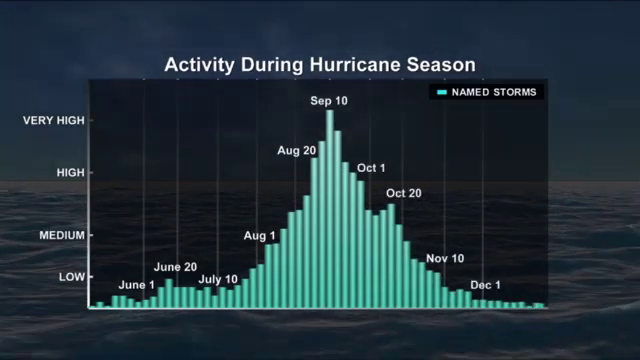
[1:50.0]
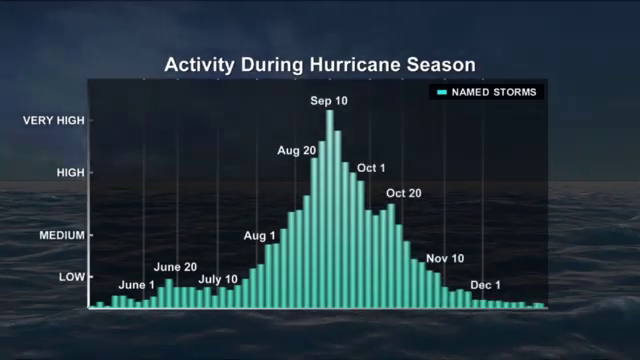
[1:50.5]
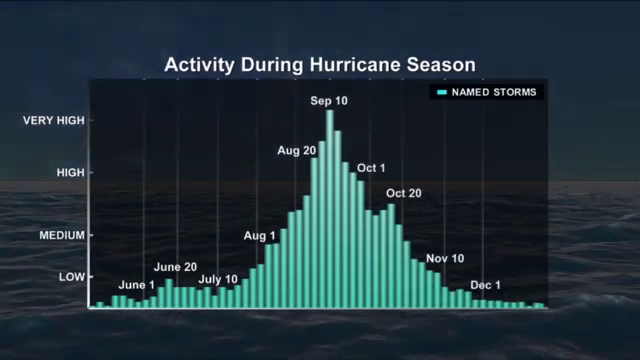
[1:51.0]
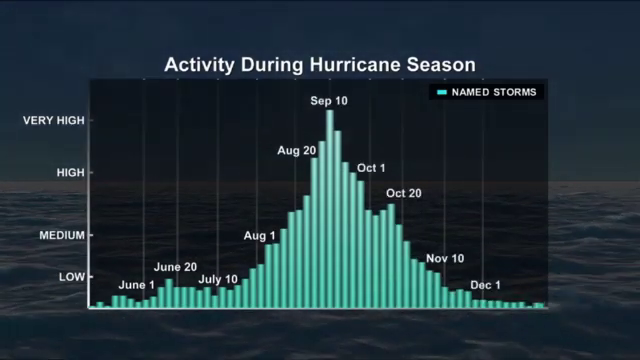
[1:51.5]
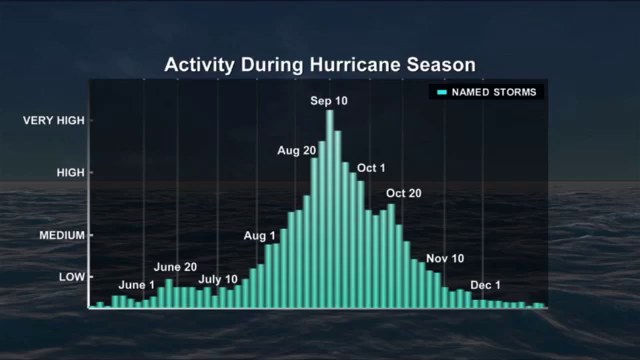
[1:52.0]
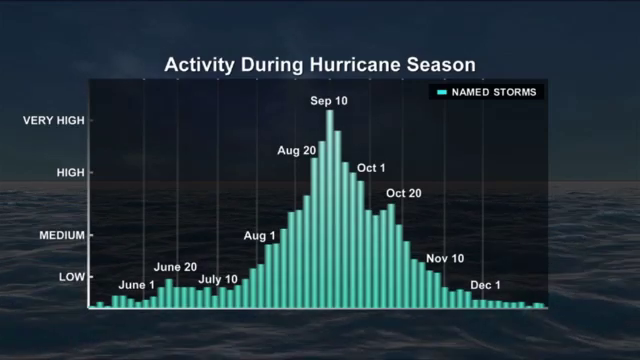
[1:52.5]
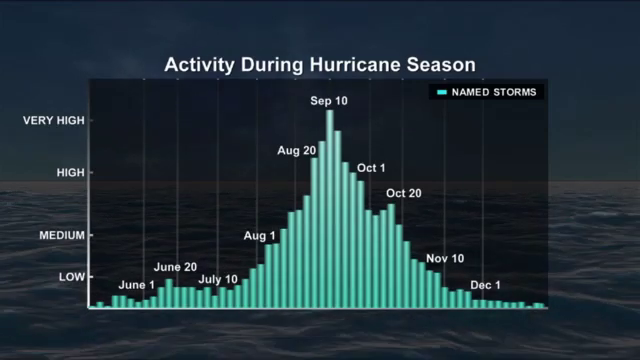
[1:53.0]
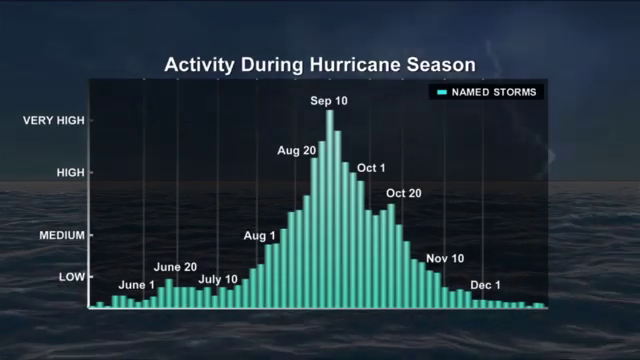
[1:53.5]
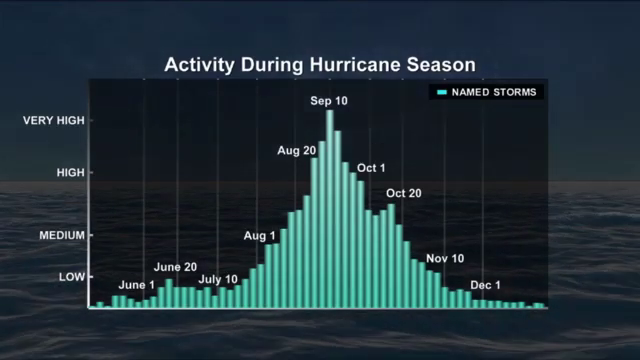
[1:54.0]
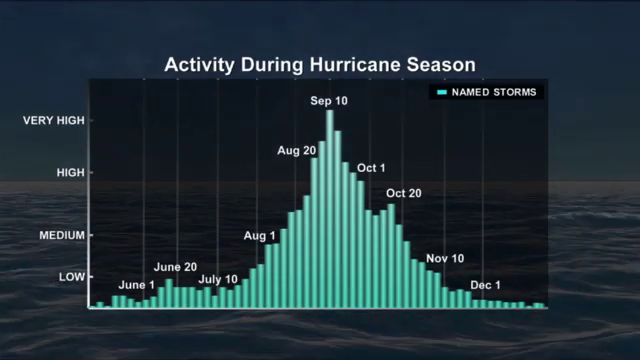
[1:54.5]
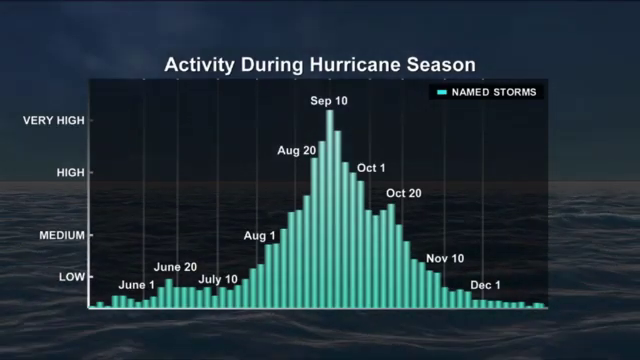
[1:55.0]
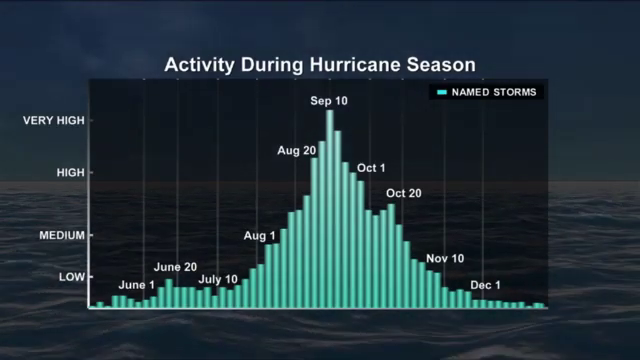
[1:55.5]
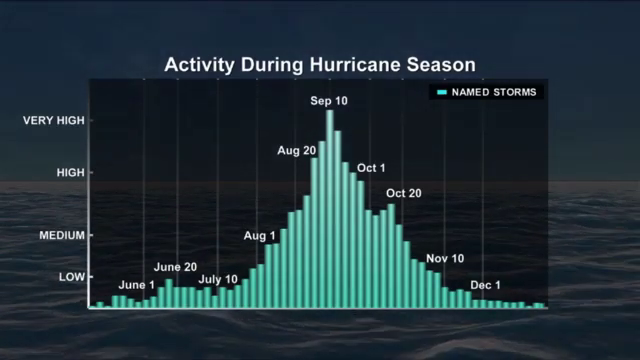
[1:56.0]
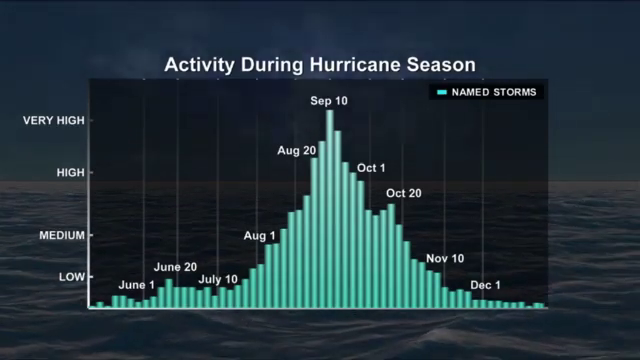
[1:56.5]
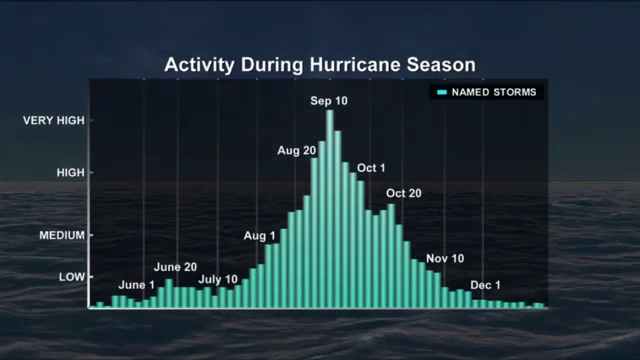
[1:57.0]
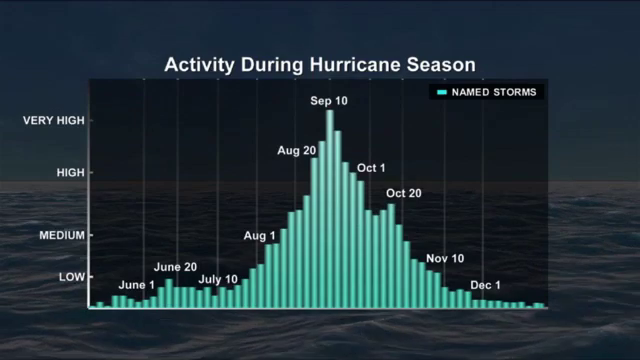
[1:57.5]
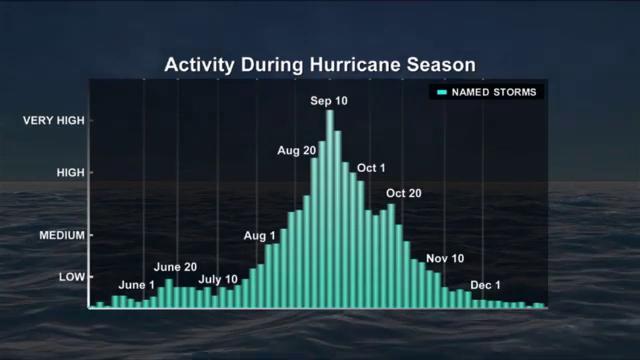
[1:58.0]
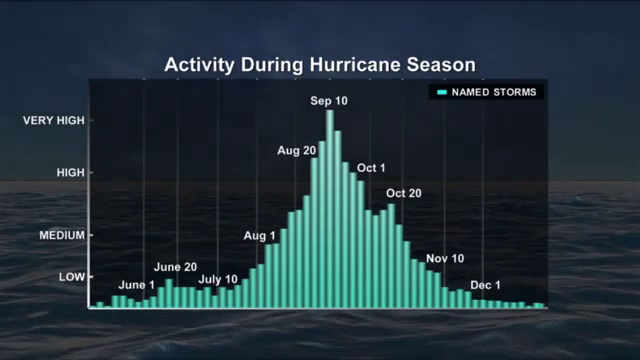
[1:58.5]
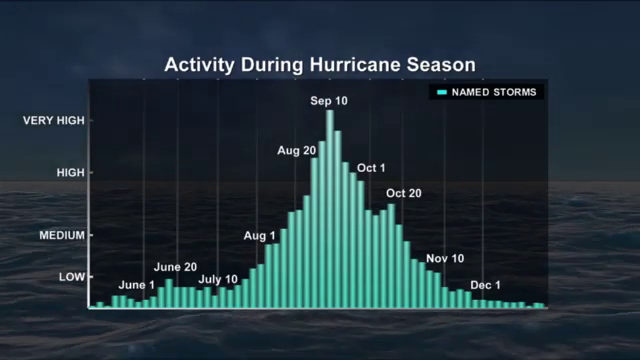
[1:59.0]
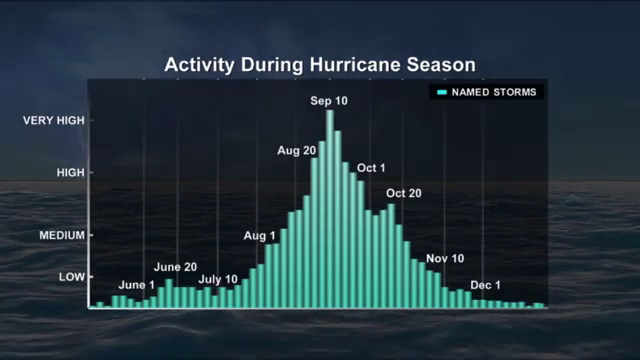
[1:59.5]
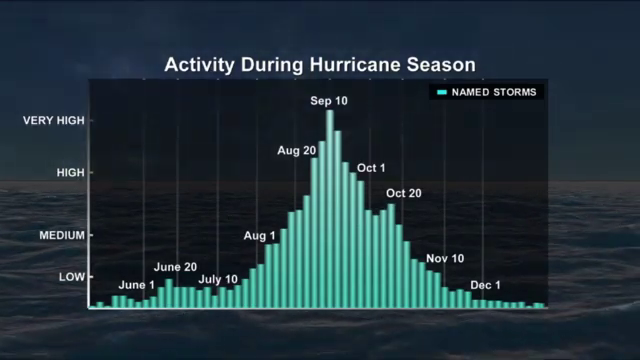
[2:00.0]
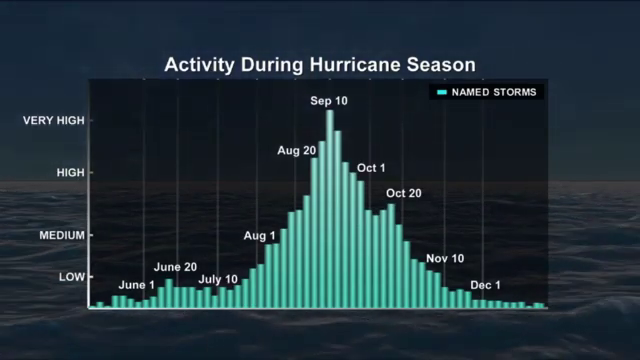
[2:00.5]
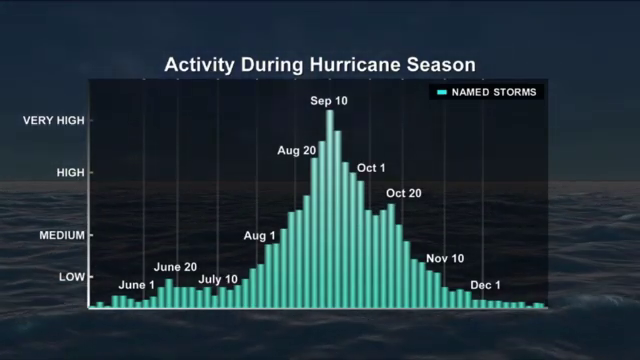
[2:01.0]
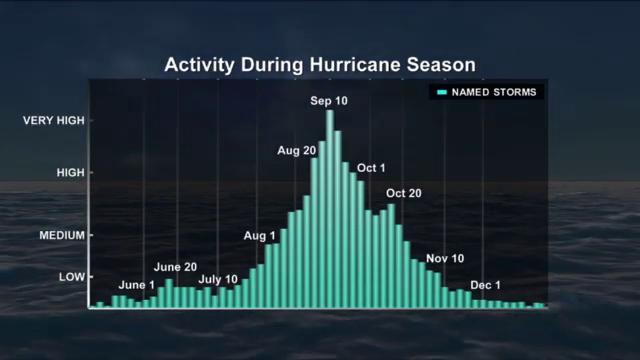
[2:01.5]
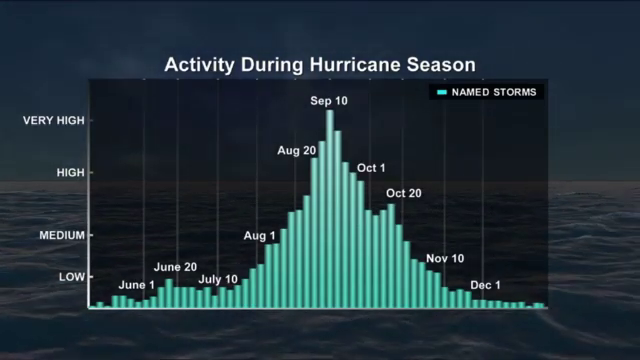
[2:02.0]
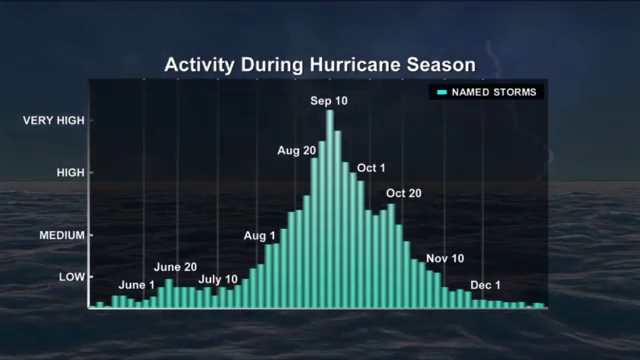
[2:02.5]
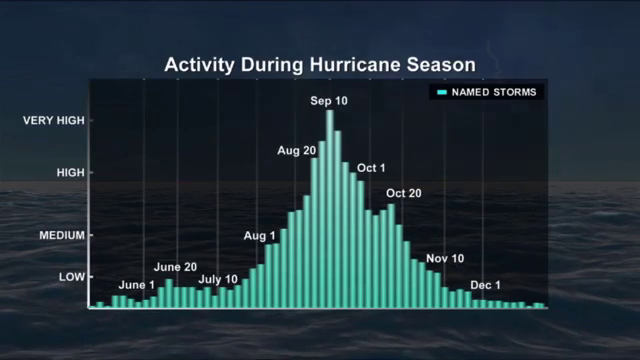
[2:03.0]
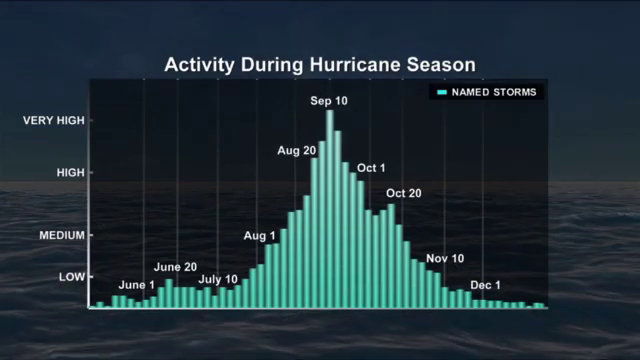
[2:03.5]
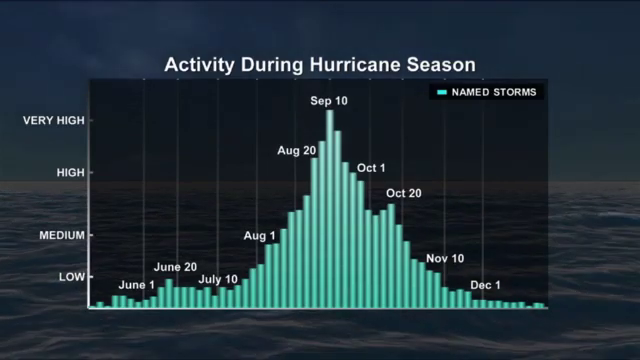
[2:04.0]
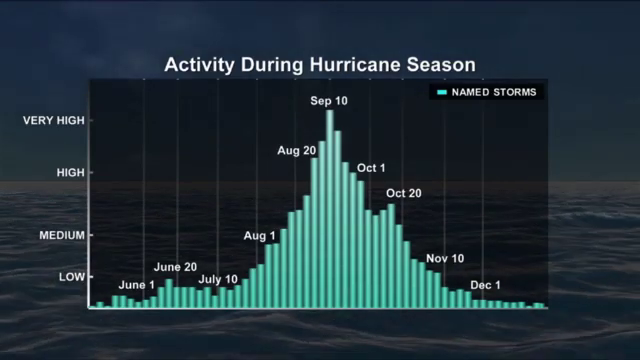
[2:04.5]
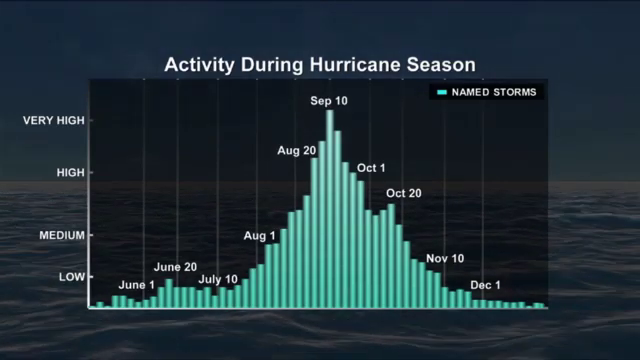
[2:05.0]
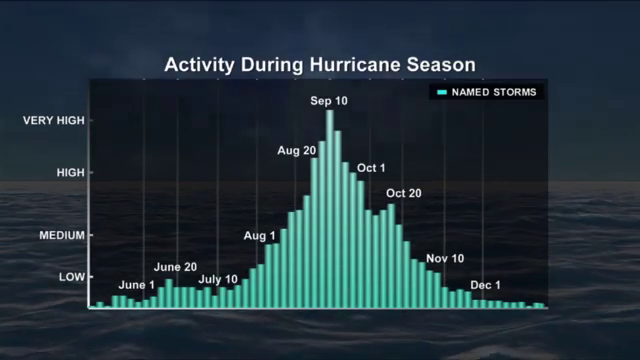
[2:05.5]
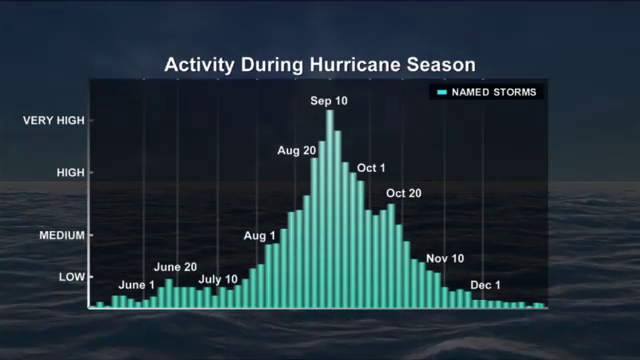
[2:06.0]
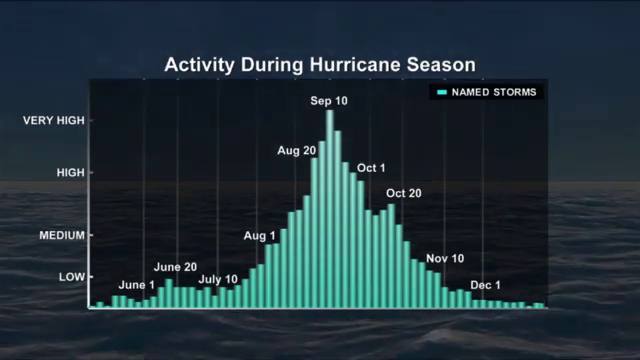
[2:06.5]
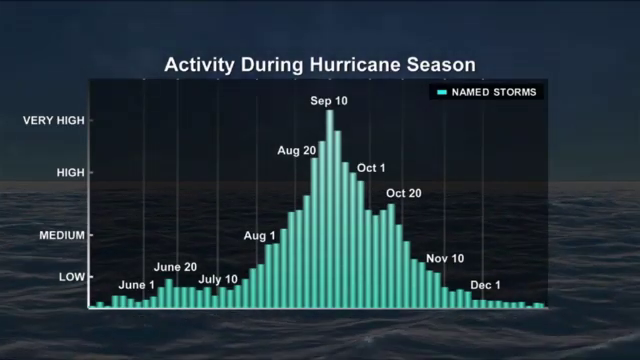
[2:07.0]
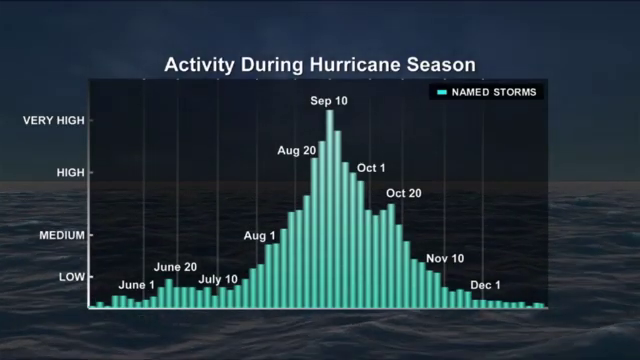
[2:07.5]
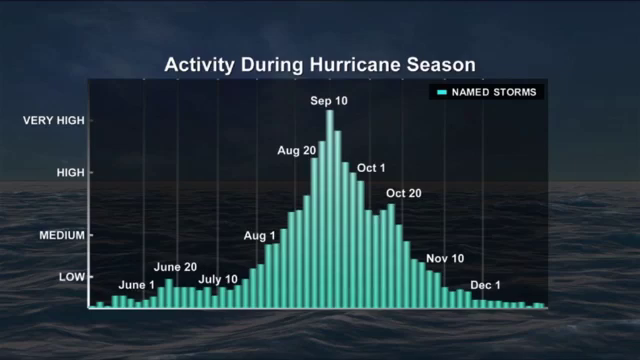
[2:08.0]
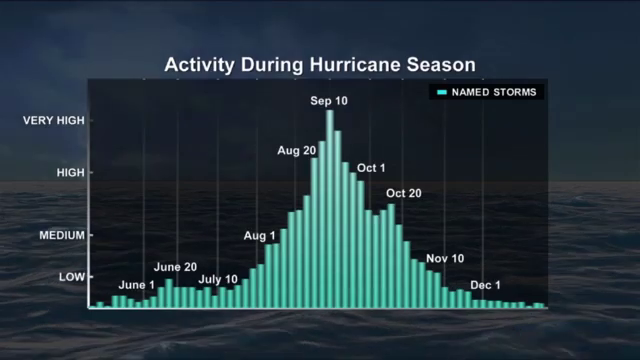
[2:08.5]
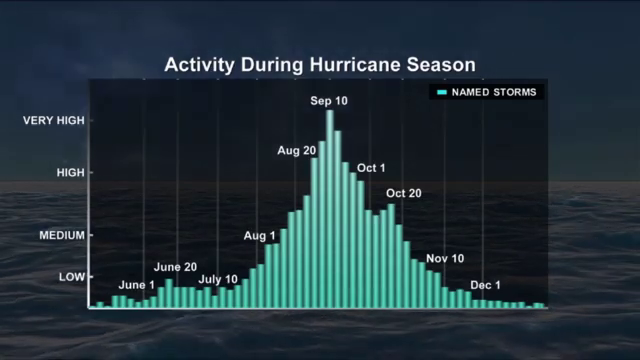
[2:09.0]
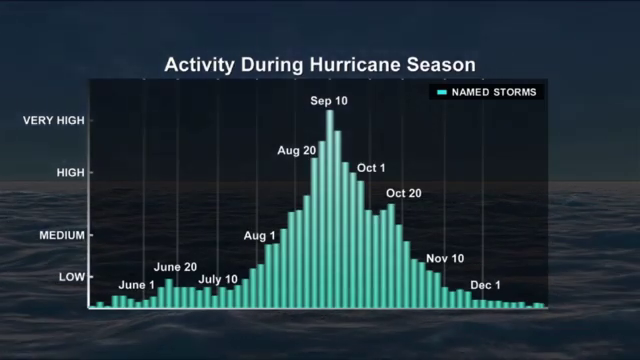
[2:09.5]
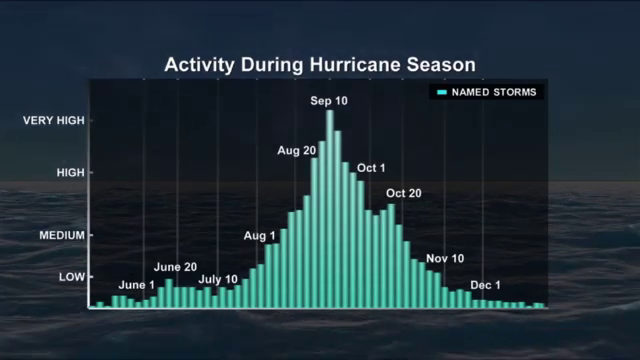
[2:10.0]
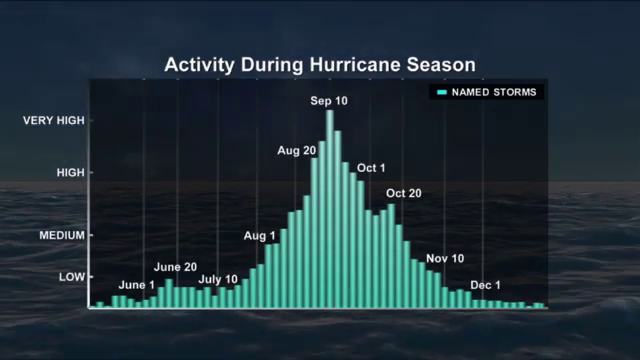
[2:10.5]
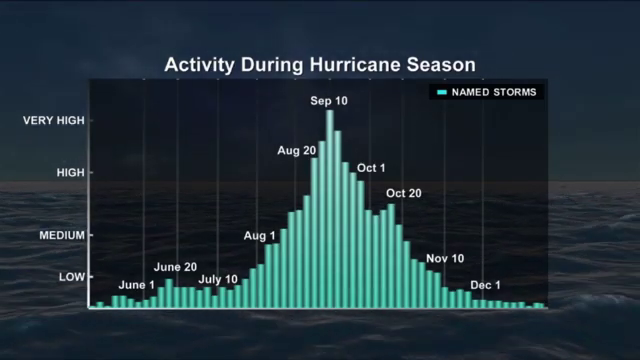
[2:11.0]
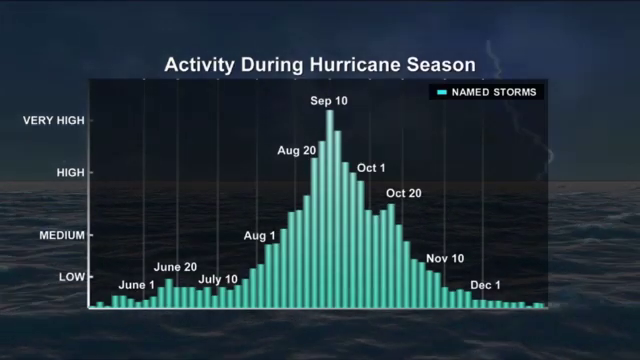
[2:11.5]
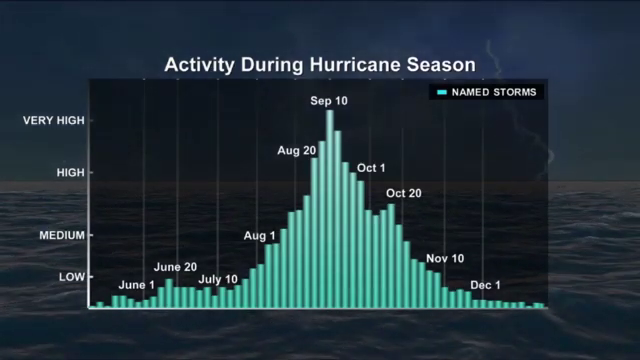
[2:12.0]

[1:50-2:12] The activity during hurricane season chart continues. Activity starts very low in June, peaks around September 10th, then heads down until around December 1st, where it is minimal. The chart only refers to named storms, without any storm names. The headings on the left are "very high," "high," "medium" and "low." Behind the chart is the ocean, where lightning strikes; the sky and water are dark because it is nighttime.